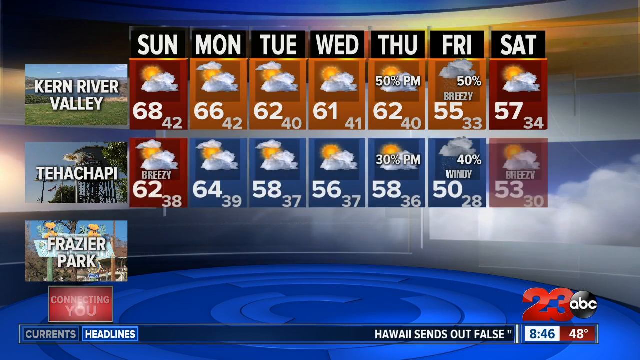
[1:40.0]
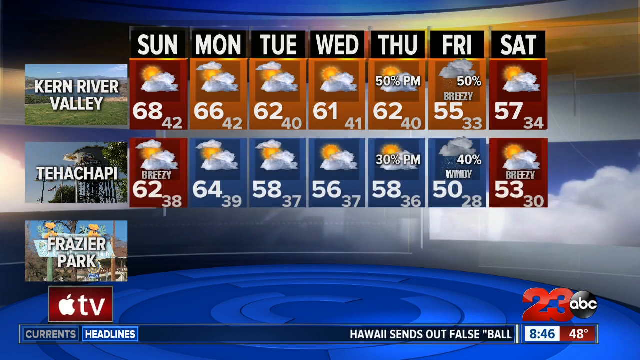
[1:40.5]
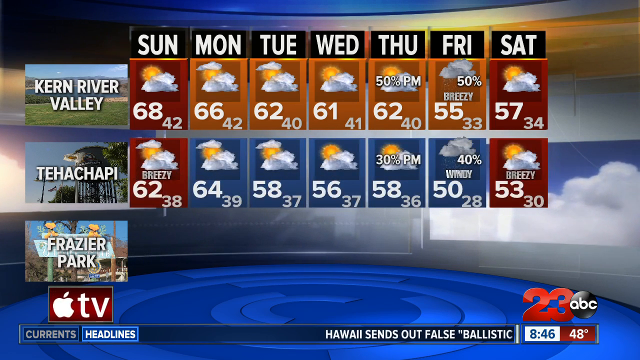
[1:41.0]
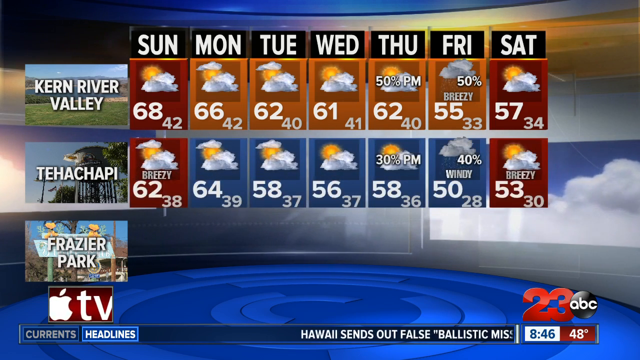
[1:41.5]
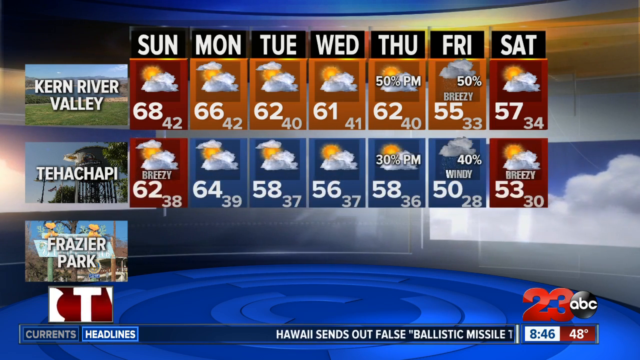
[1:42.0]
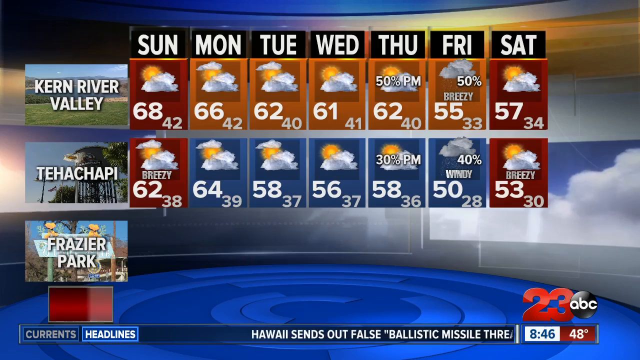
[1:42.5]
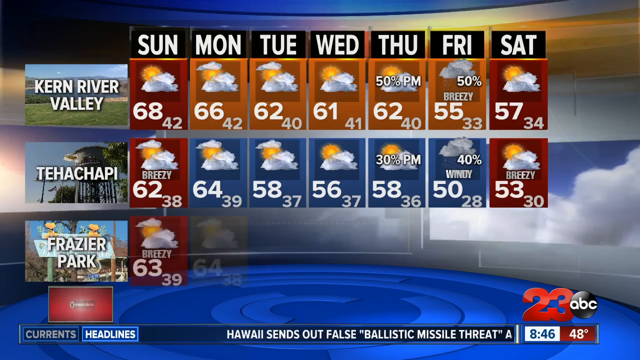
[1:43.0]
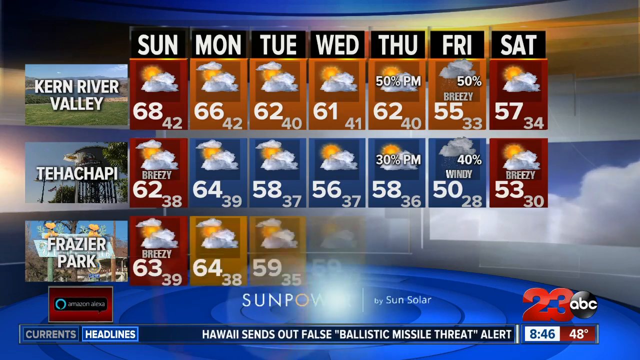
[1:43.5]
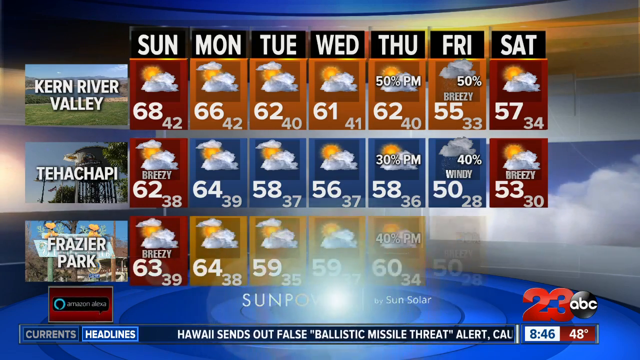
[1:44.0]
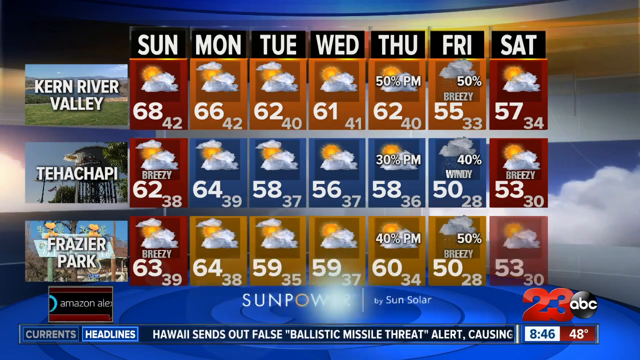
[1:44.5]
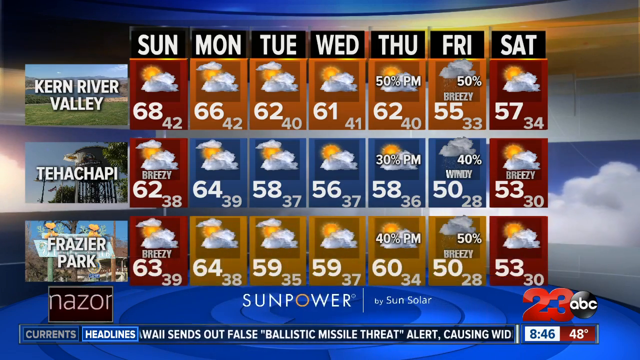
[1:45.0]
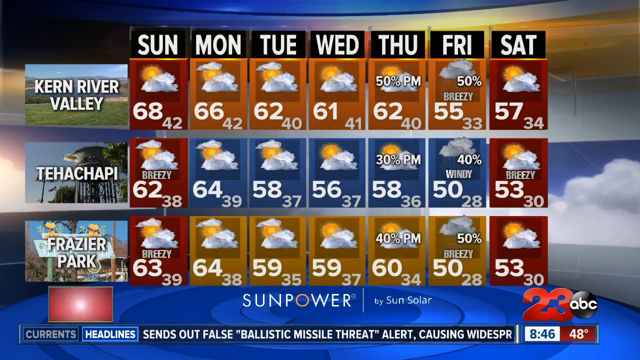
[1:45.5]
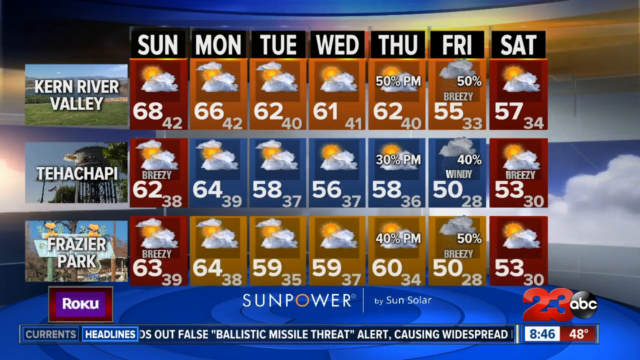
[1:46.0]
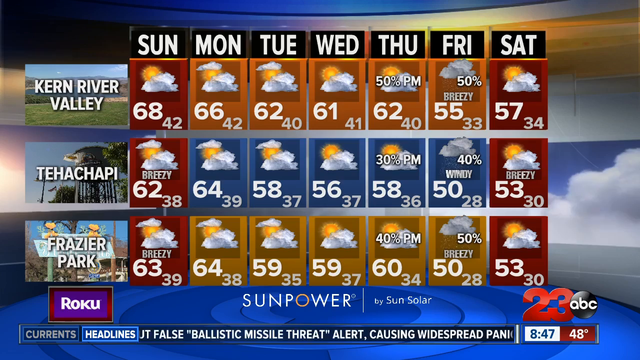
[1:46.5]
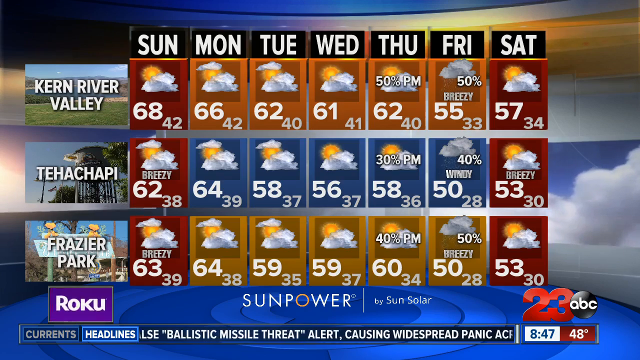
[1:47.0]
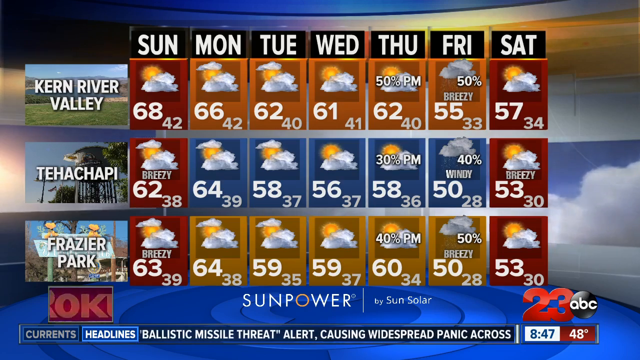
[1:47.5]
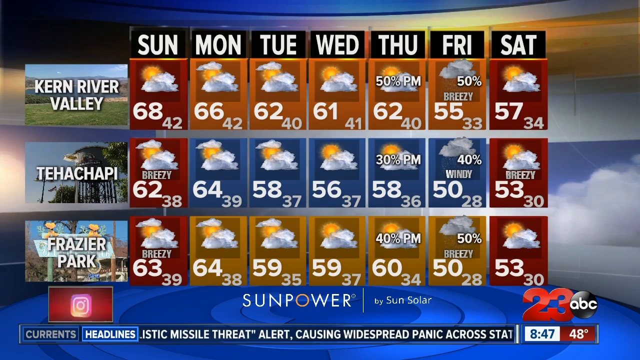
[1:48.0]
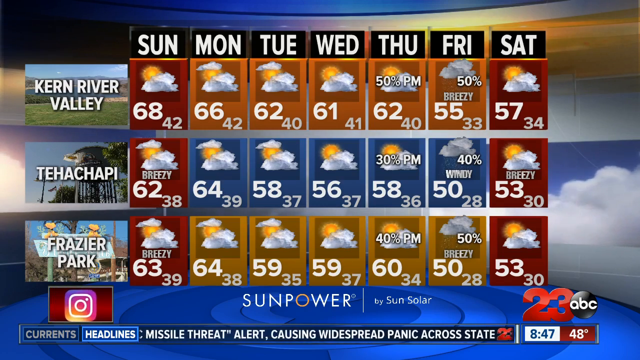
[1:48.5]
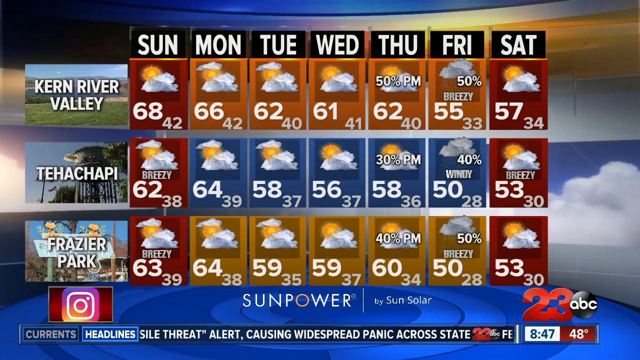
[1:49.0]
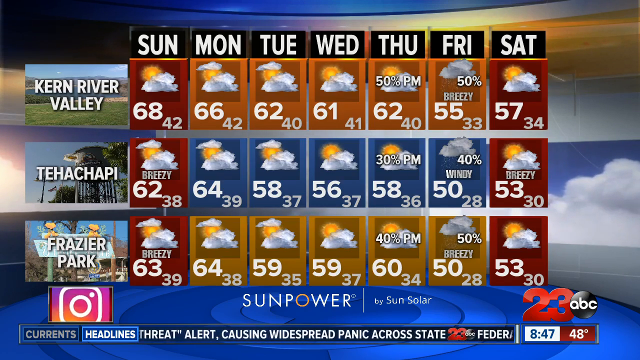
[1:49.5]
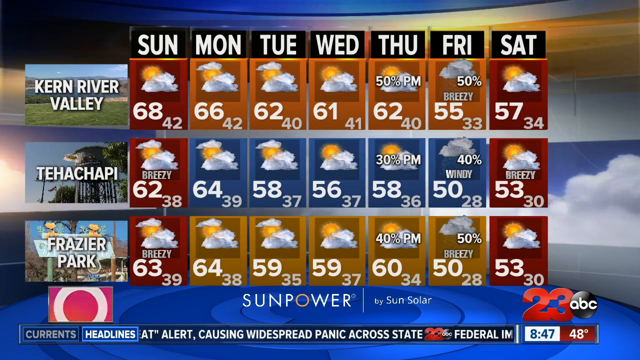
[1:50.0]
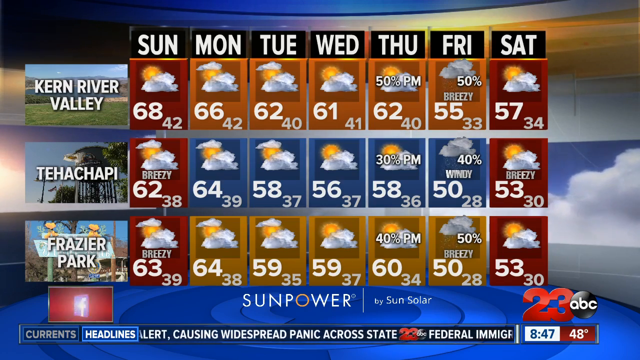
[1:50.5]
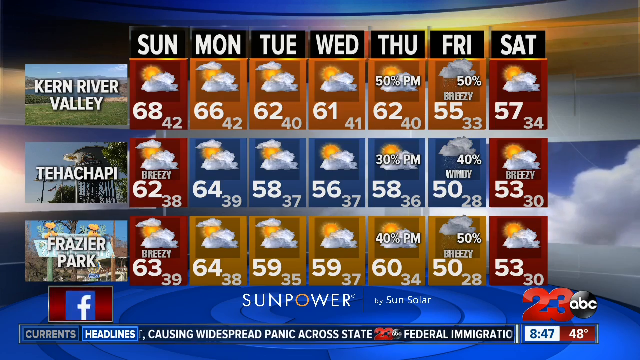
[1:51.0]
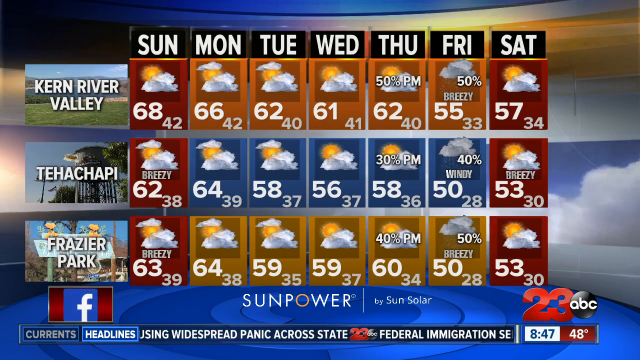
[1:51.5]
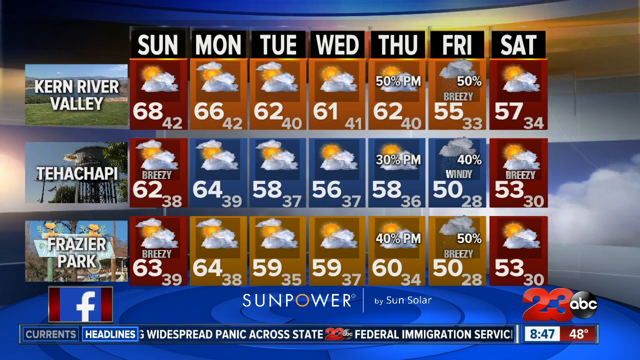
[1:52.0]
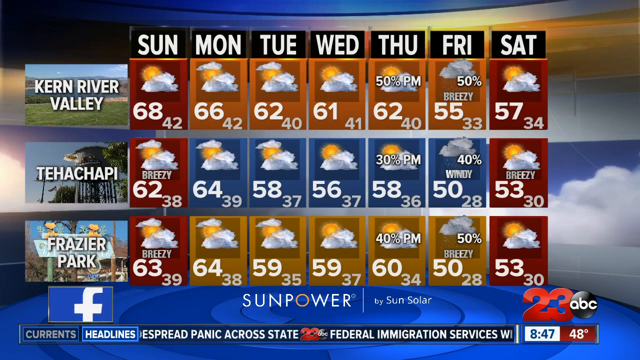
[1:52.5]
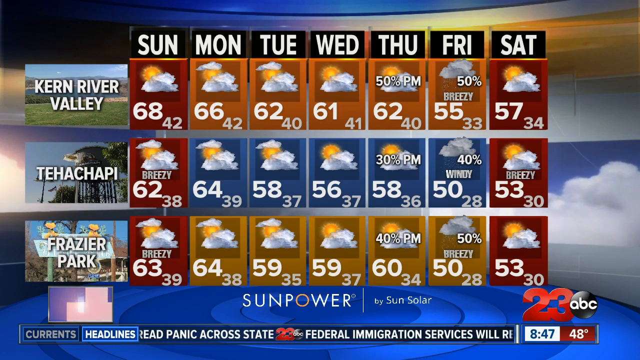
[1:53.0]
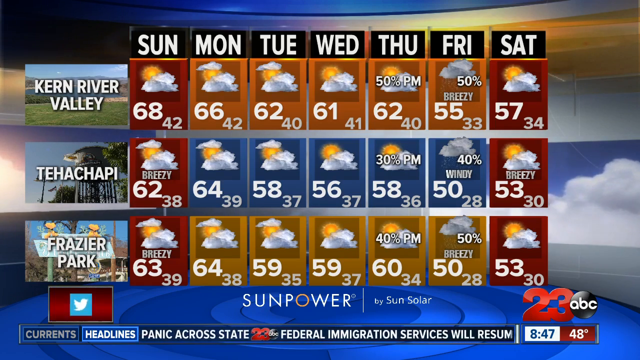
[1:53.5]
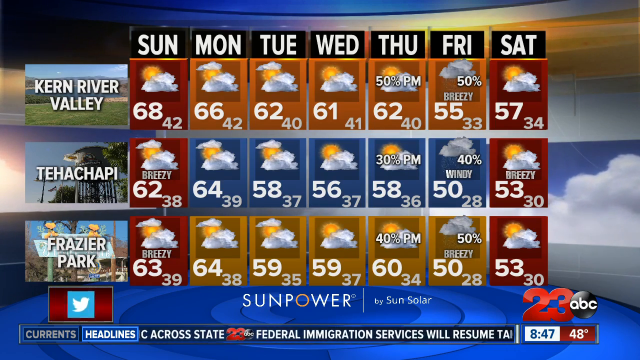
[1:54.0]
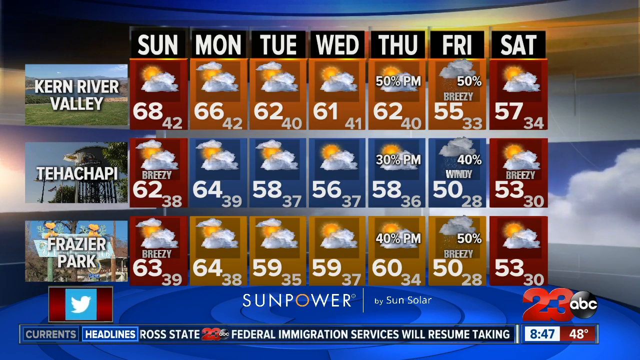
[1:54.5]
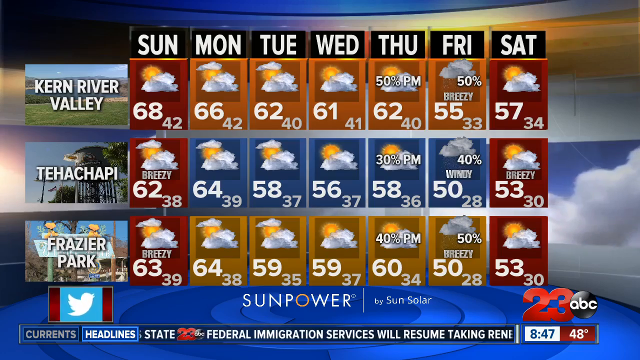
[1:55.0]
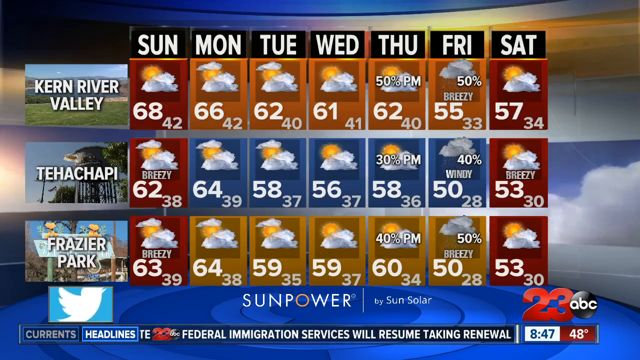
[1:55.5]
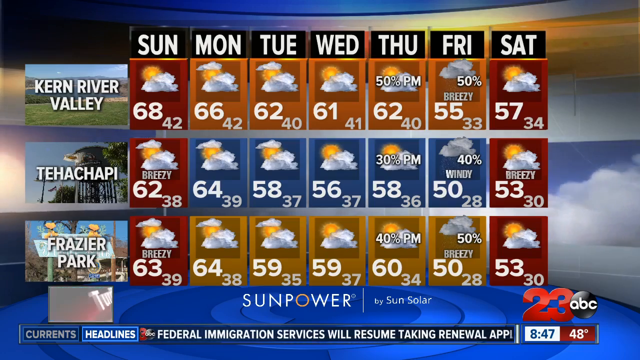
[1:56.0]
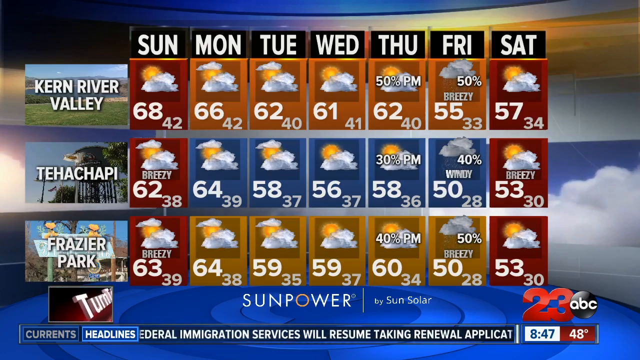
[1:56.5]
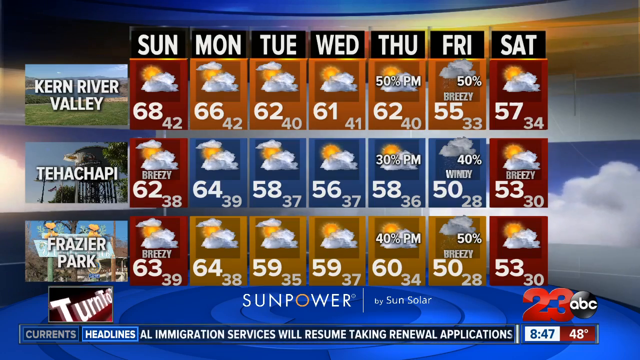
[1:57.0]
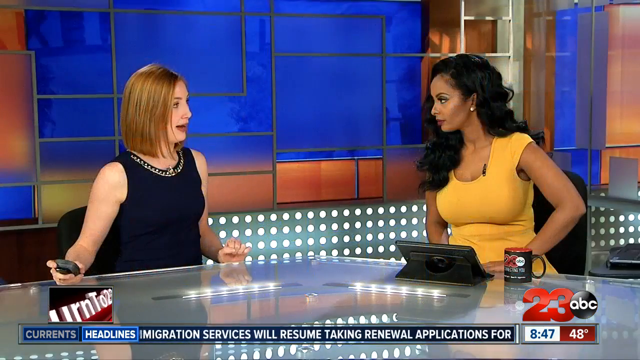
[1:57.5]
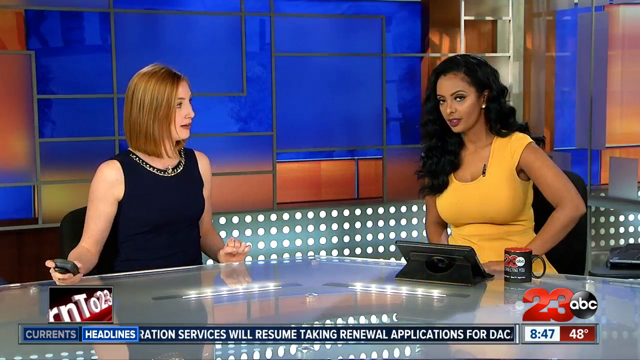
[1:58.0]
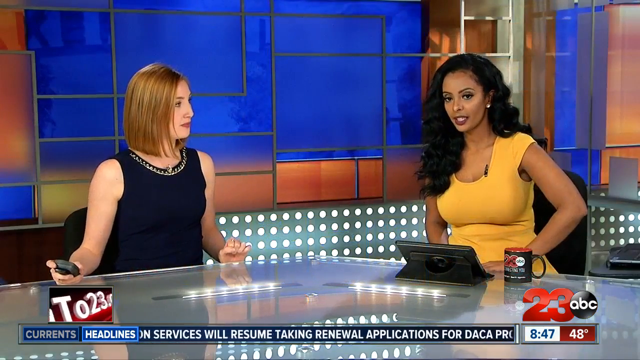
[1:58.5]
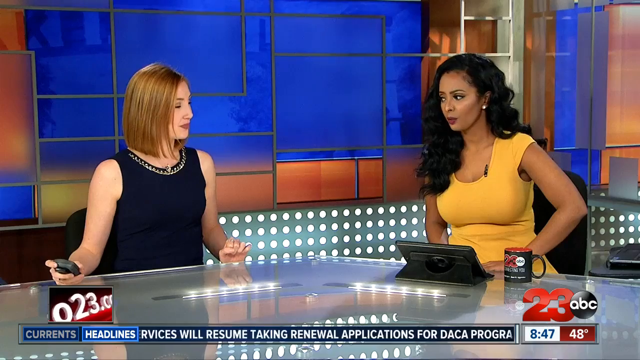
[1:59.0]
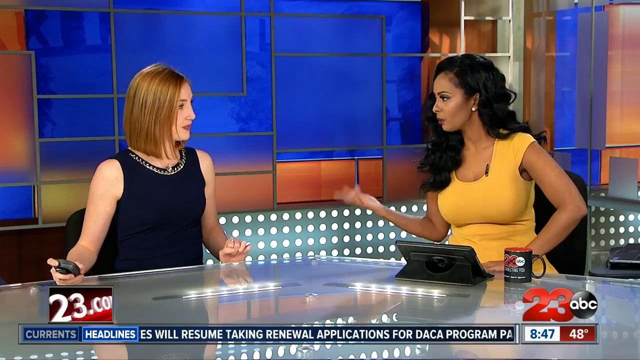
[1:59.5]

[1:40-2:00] Tsehok Chahpi is shown with a breeze on Sunday at 62 to 38, Monday 64 to 39, Tuesday 58 to 37, Wednesday 56 to 37, then 58 to 36, Friday windy at 50 to 28, and Saturday a little breezy at 53 to 30 degrees. Last comes Frieser Park: Sunday 63 to 39, Monday 64 to 38, Tuesday 59 to 35, Wednesday 59 to 37, Thursday 60 to 34, Friday a little breezy at 50 to 29, and Saturday 53 to 30 degrees. The scene then returns to the 23 ABC studio with the woman in the mustard dress from the beginning, and the two women seem to be discussing the forecast.